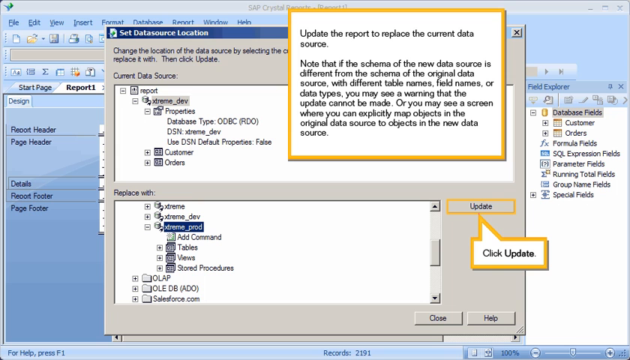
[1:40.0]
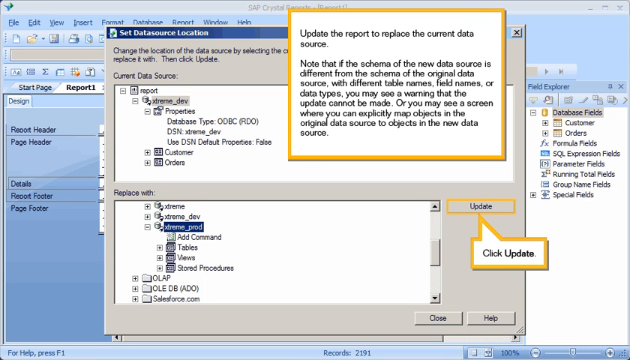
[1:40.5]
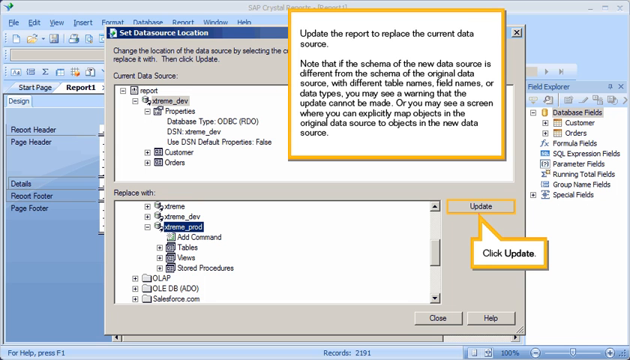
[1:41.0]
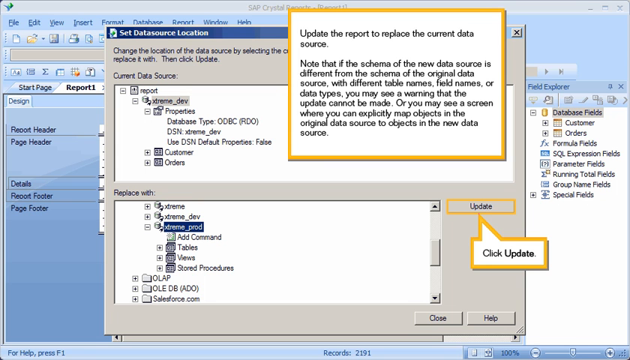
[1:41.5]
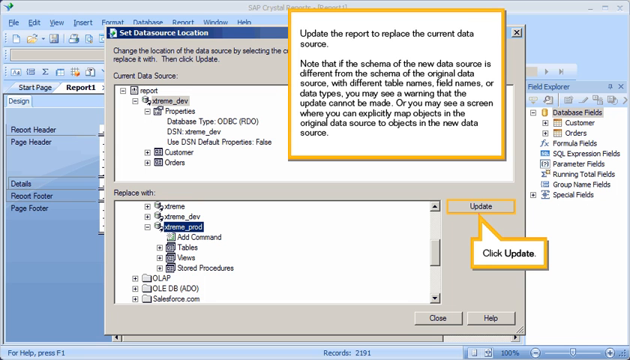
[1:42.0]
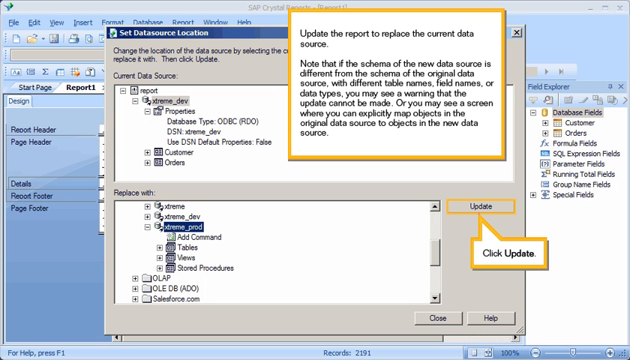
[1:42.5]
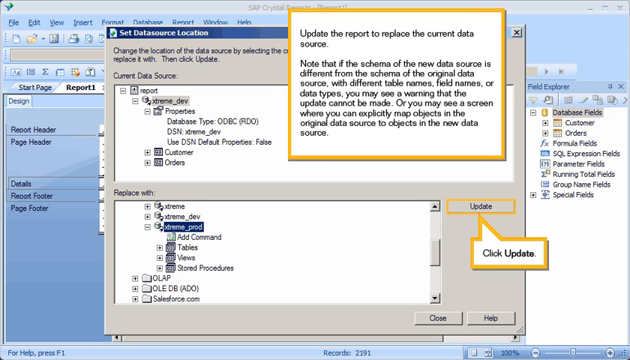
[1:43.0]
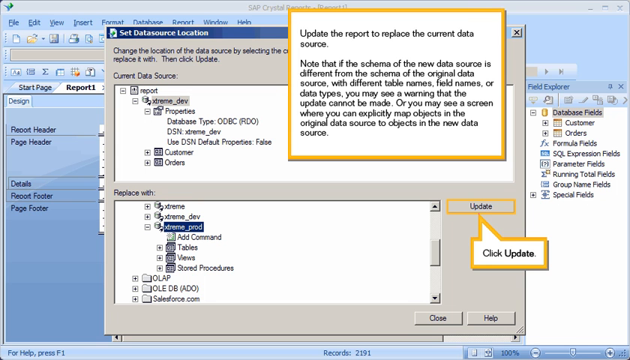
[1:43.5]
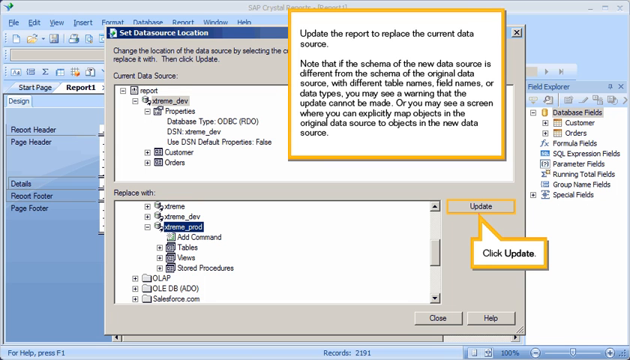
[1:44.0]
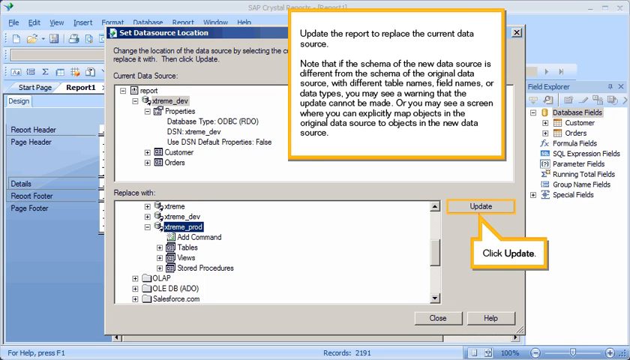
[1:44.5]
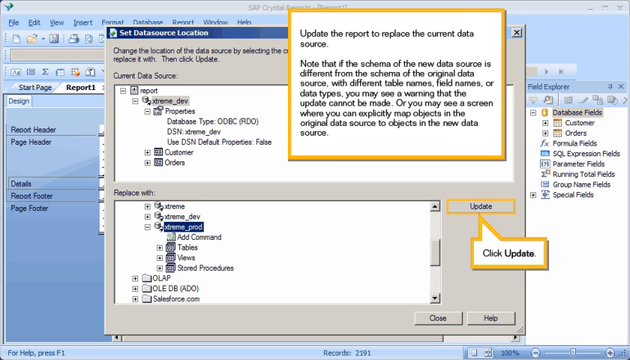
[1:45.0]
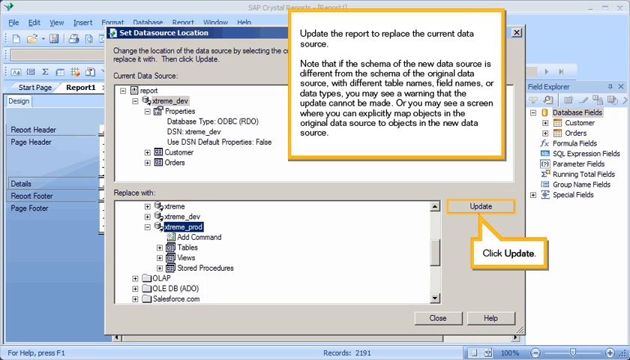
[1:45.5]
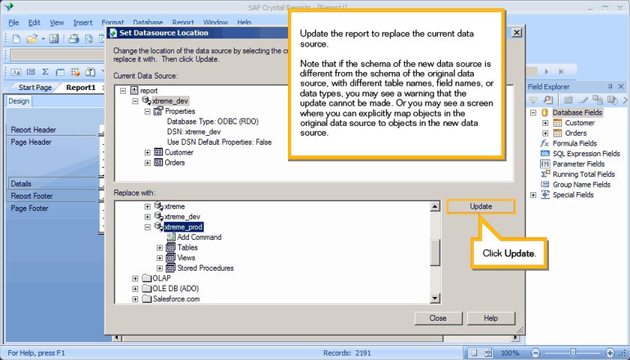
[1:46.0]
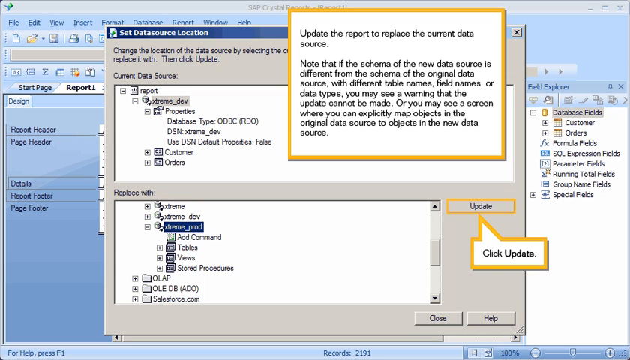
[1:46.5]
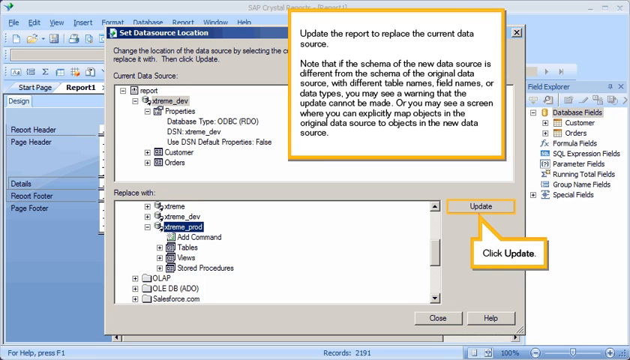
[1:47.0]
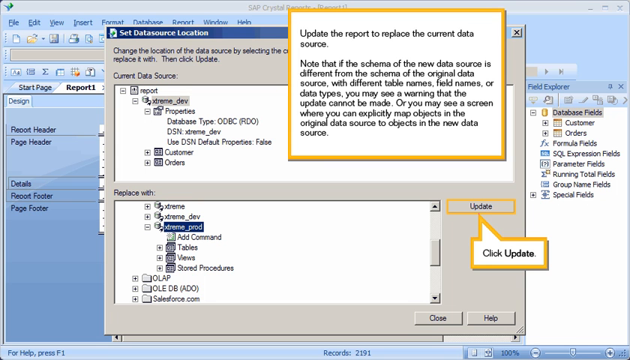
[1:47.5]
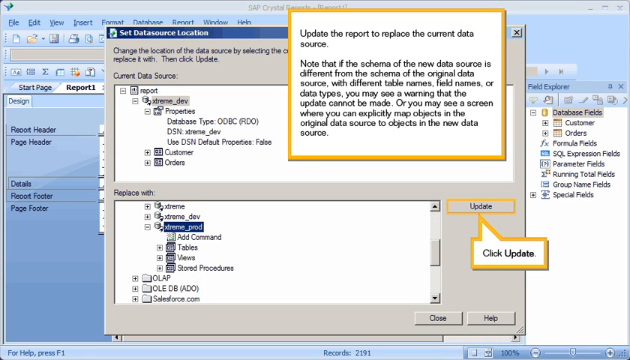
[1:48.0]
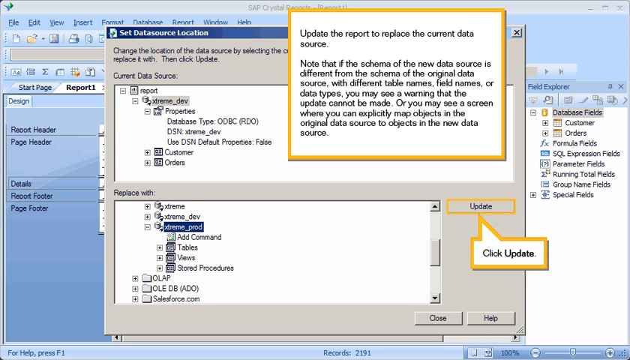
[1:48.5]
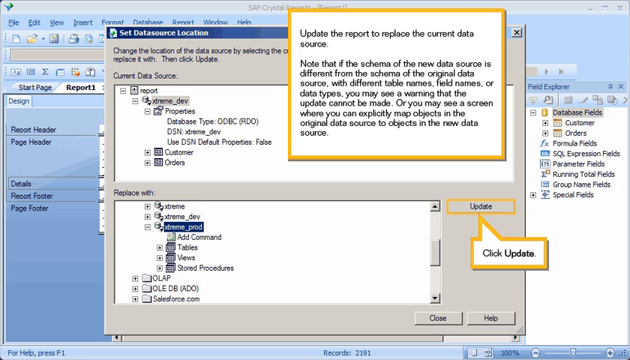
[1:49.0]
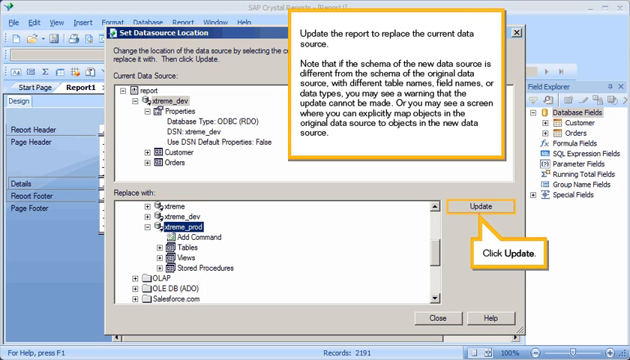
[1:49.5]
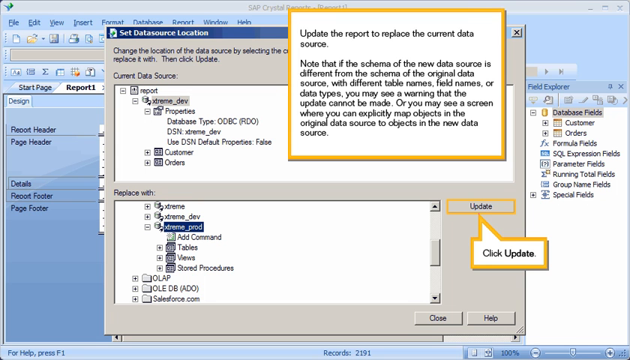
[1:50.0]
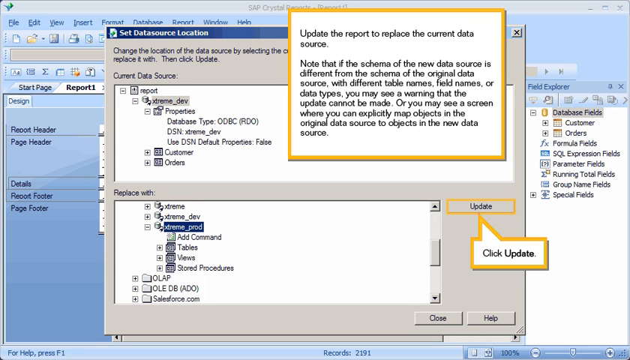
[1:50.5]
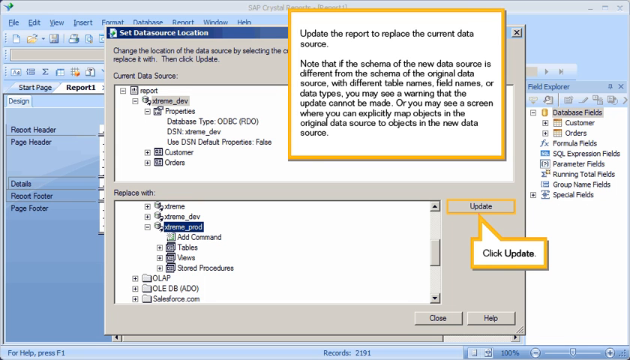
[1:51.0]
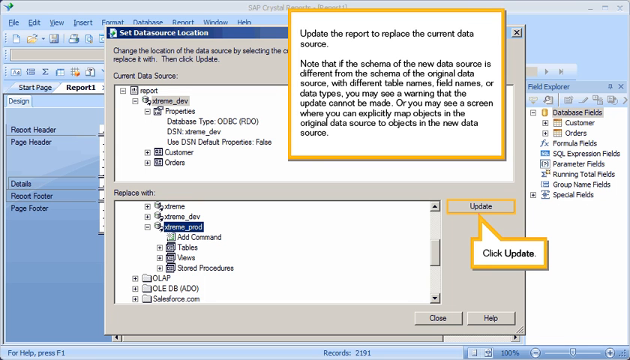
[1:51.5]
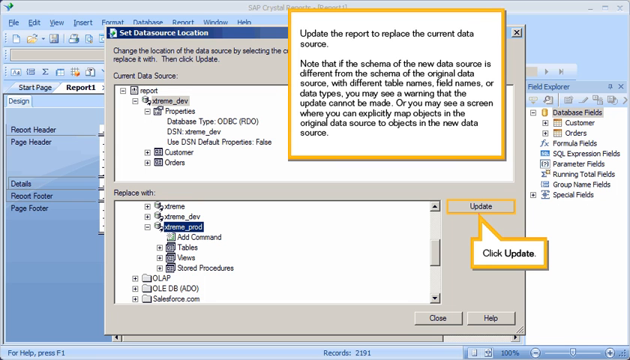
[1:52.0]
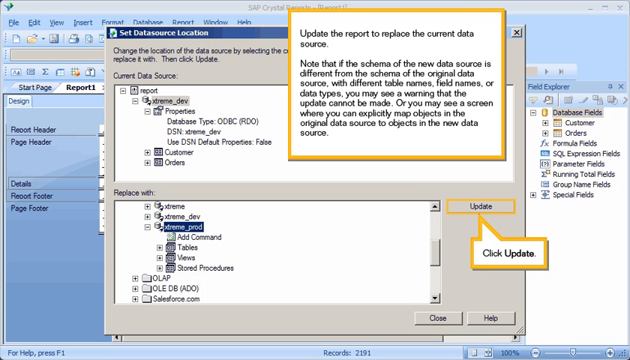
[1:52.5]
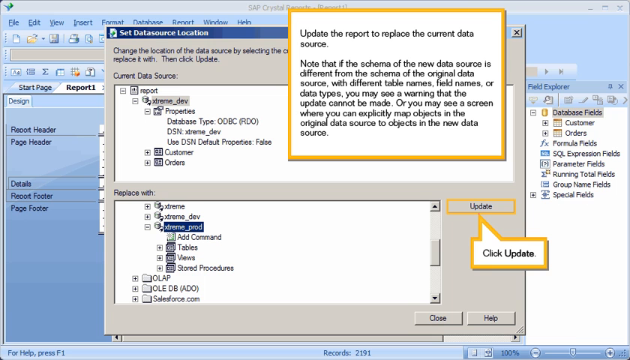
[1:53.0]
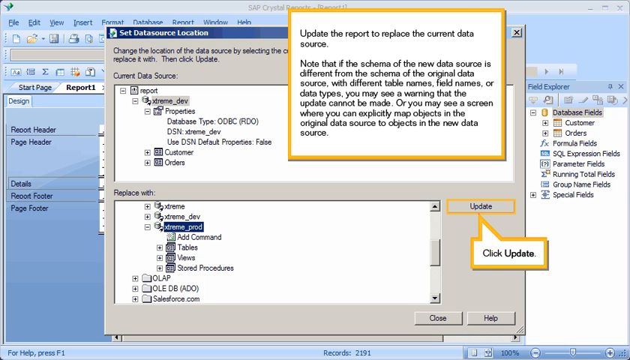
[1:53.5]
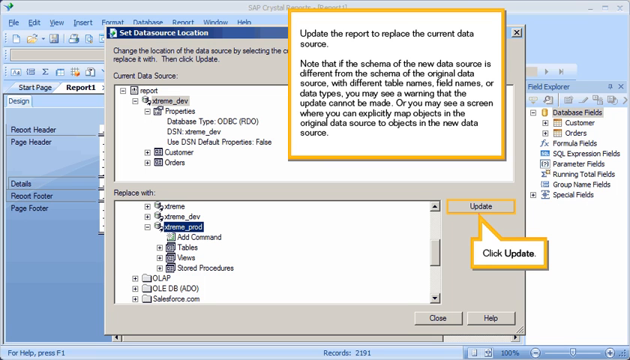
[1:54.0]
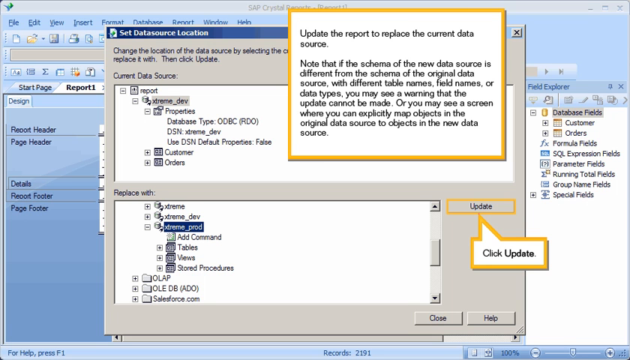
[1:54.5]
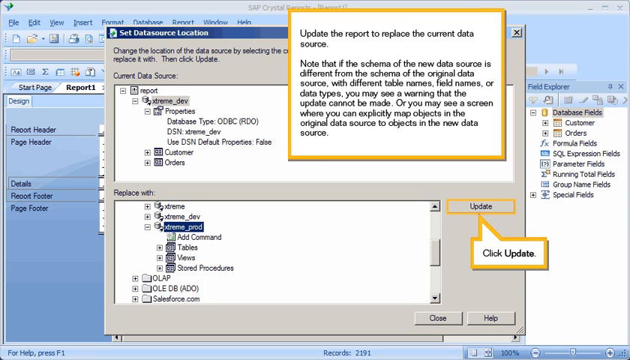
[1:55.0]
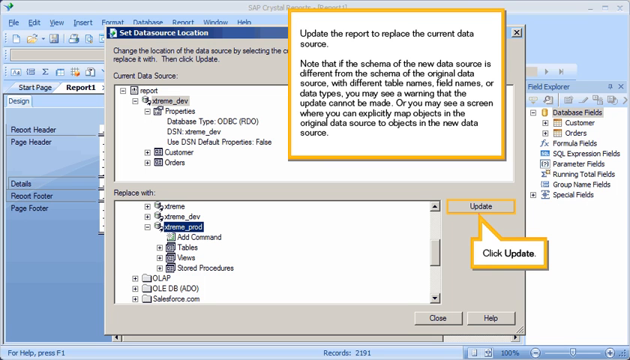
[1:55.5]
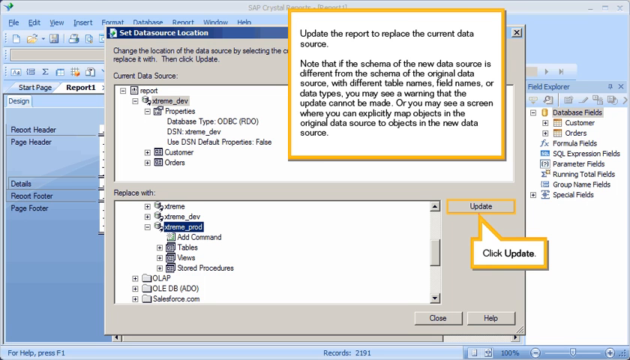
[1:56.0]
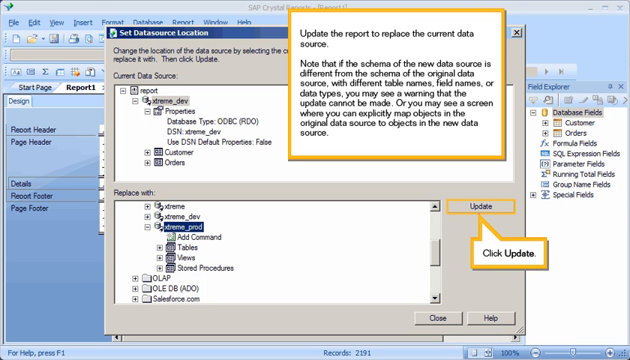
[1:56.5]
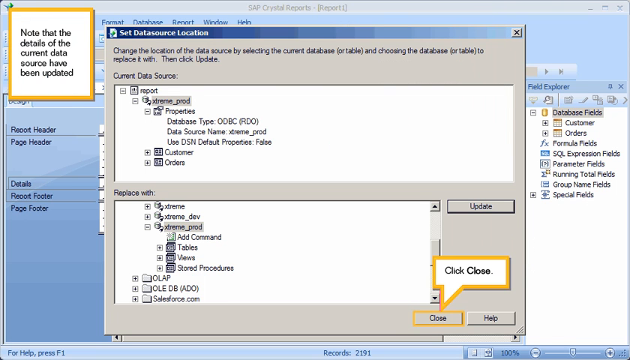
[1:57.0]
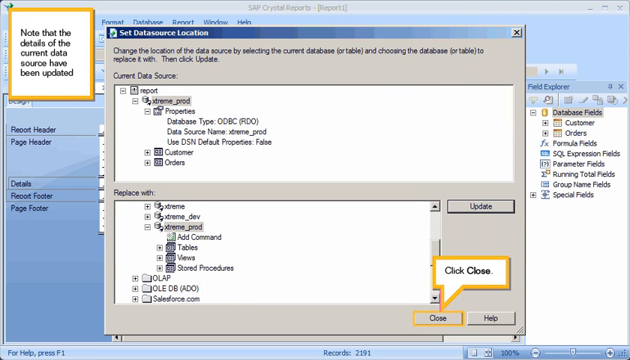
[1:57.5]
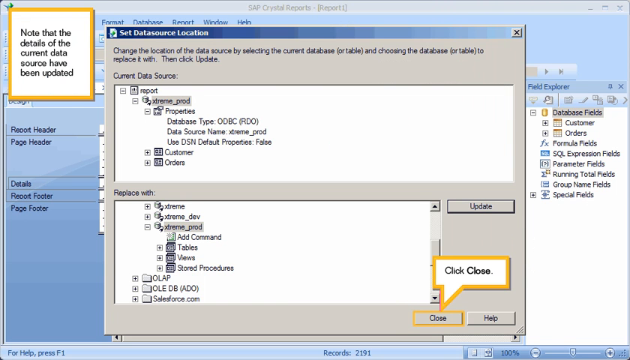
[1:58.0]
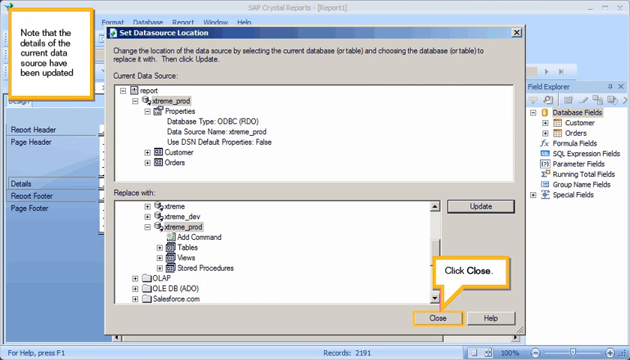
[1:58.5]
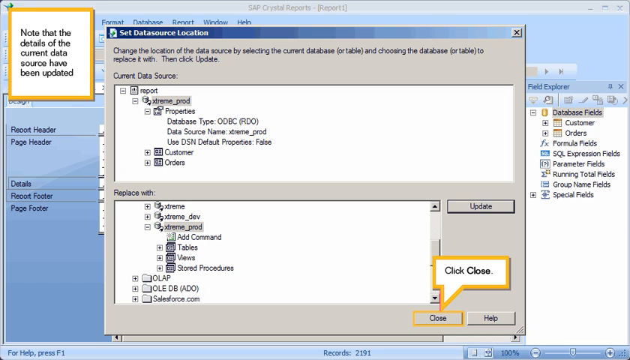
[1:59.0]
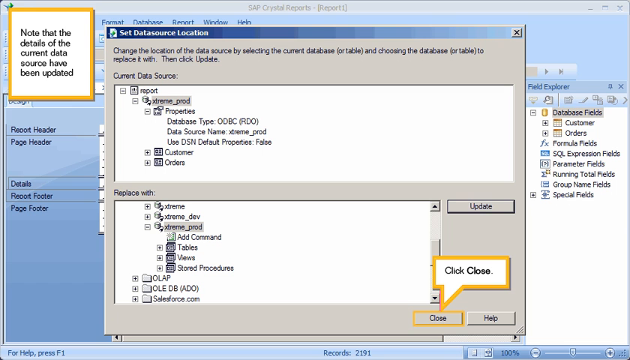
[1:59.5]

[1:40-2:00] The screen stays frozen on the open program with a blue border and gray and white dialog boxes. A white text box framed in yellow remains on screen, reading: "Update the report to replace the current data source. Note that if the schema of the new data source is different from the schema of the original data source with different table names, field names, or data types, you may see a warning that the update cannot be made. Or you may see a screen where you can explicitly map objects in the original data source to objects in the new data source." Another white yellow-framed box says "Click Update" and points to the Update button. In the background, the vertical rectangle with program information remains, listing database fields, calendar, orders, formula fields, expression fields, parameter fields, running total fields, group name fields, and special fields.